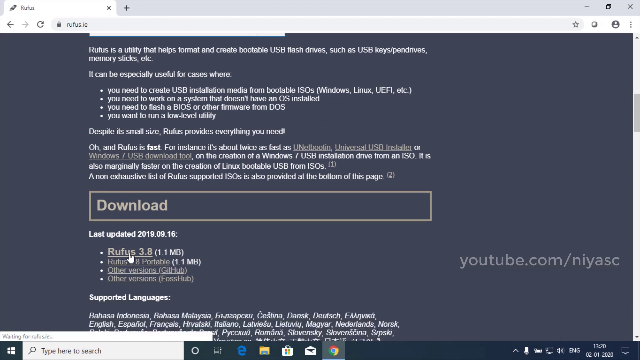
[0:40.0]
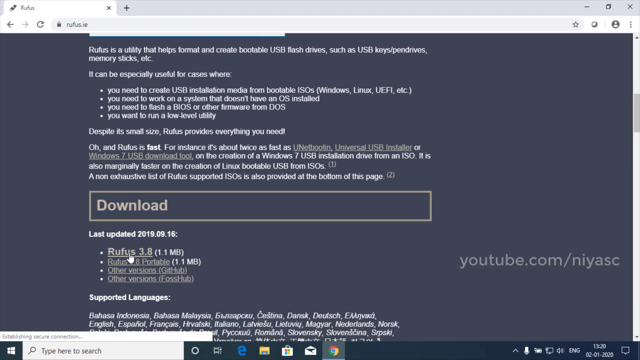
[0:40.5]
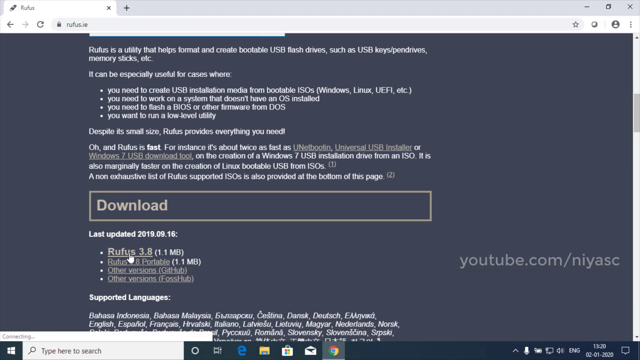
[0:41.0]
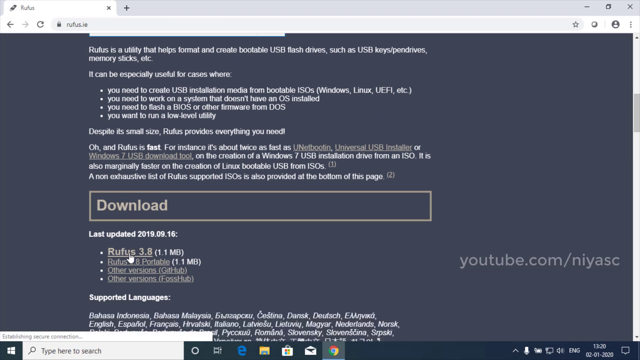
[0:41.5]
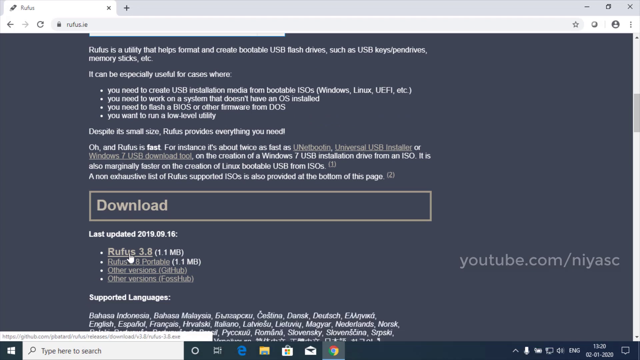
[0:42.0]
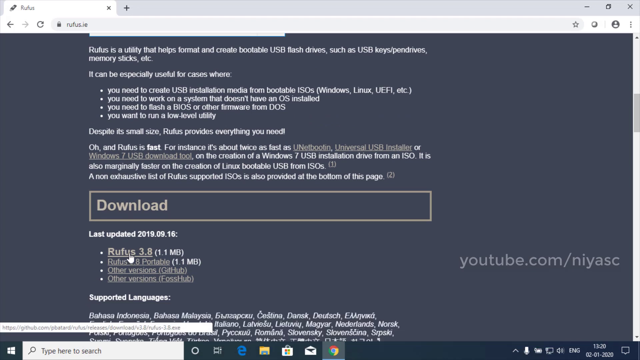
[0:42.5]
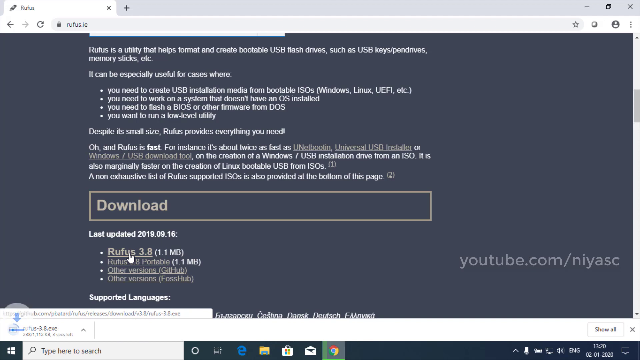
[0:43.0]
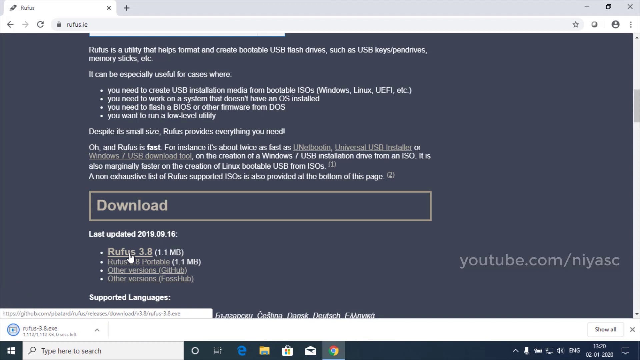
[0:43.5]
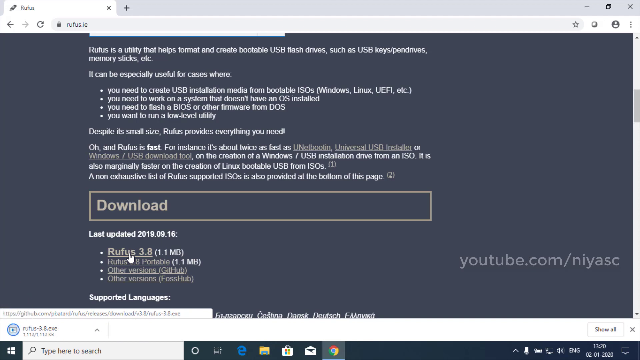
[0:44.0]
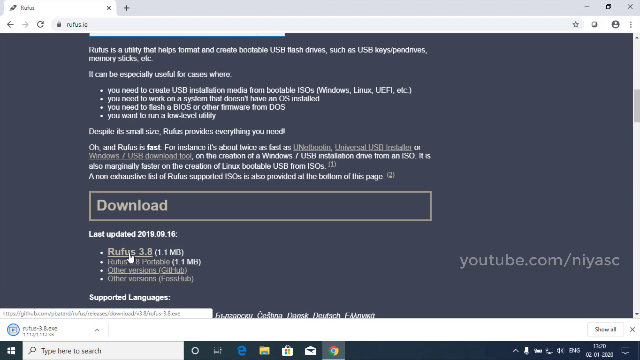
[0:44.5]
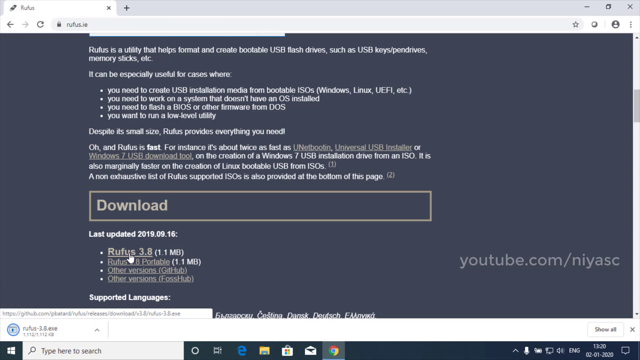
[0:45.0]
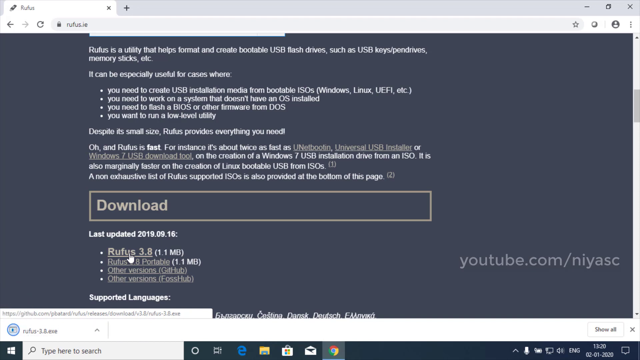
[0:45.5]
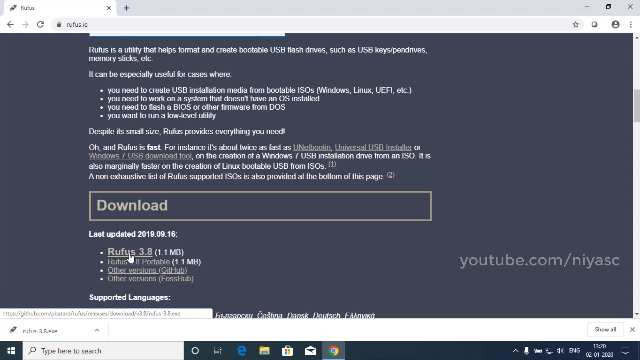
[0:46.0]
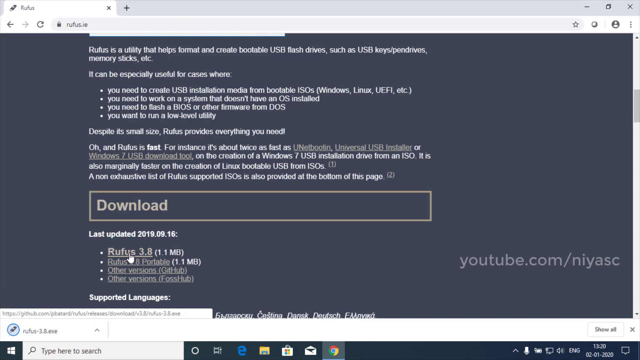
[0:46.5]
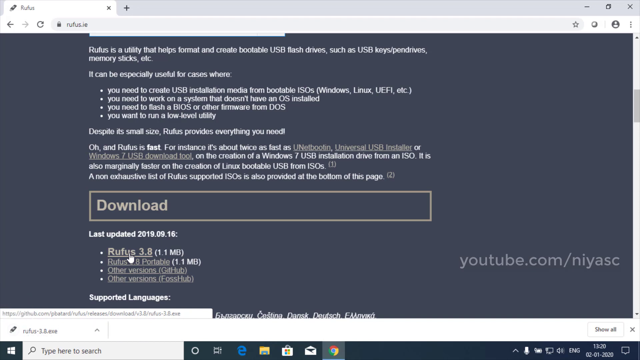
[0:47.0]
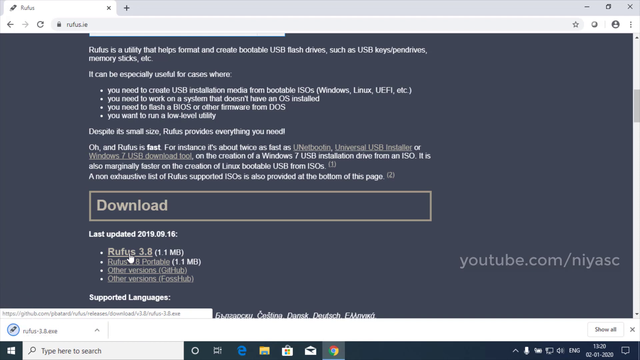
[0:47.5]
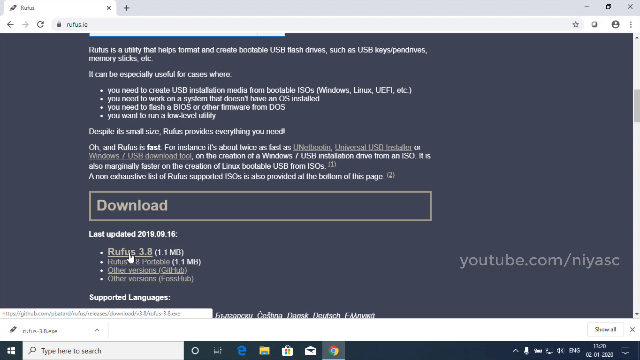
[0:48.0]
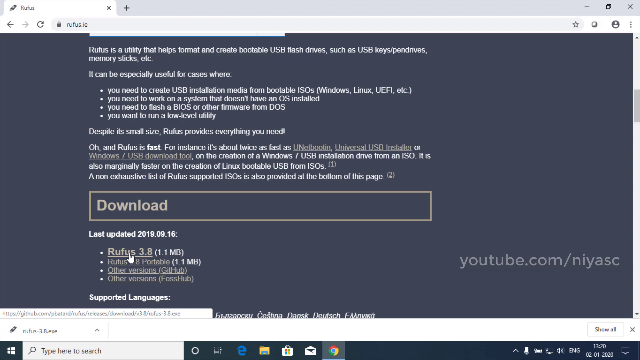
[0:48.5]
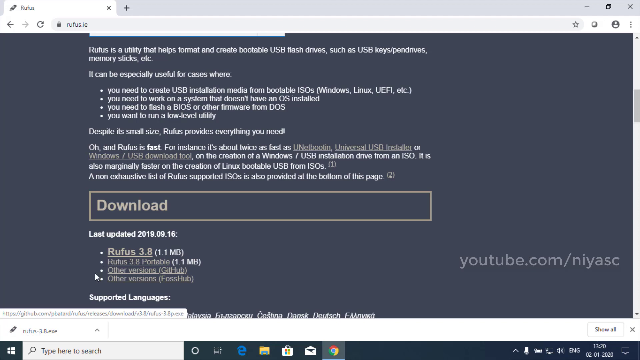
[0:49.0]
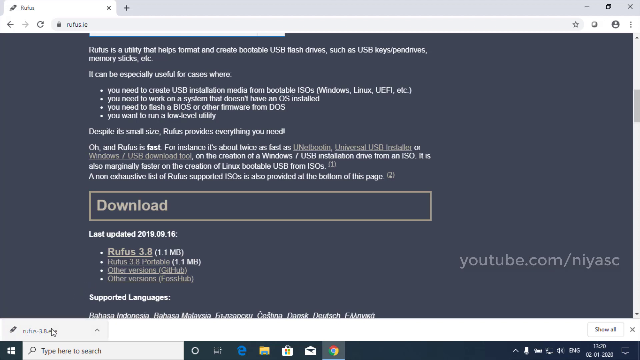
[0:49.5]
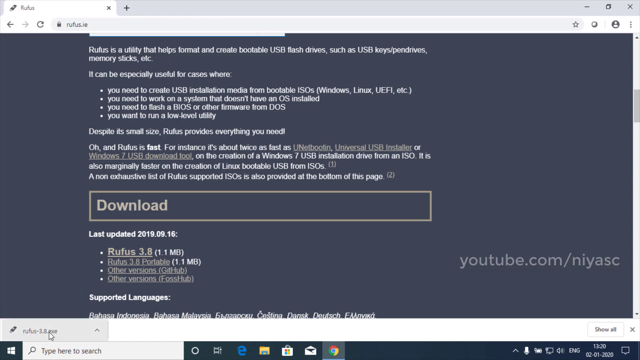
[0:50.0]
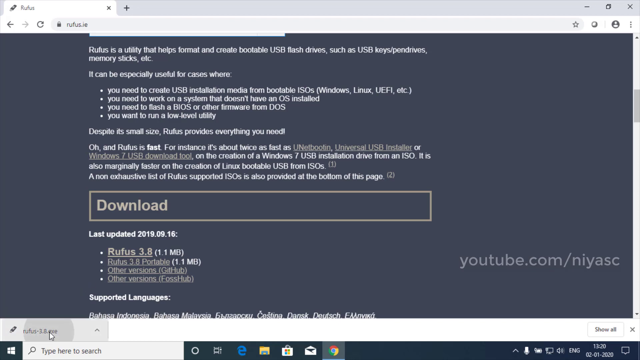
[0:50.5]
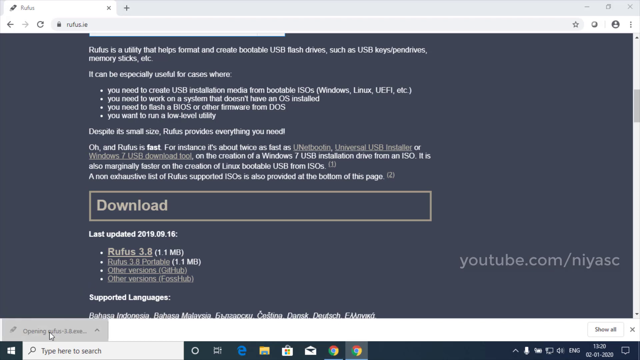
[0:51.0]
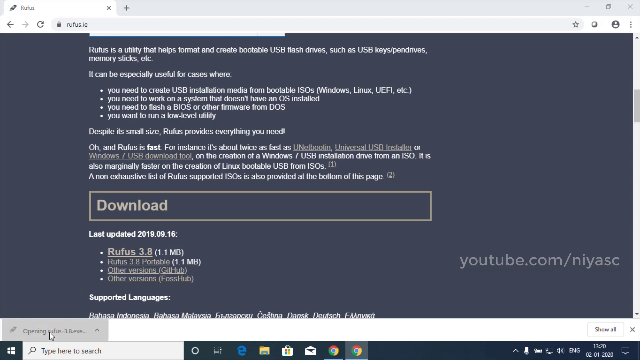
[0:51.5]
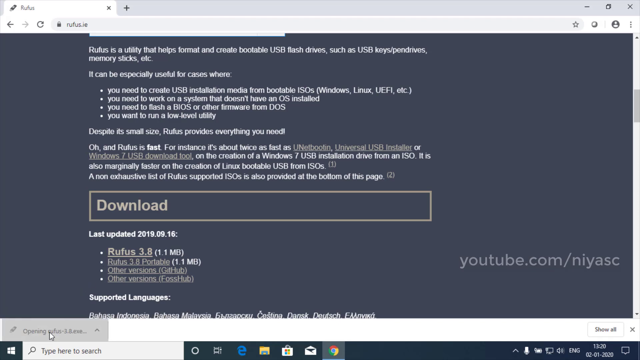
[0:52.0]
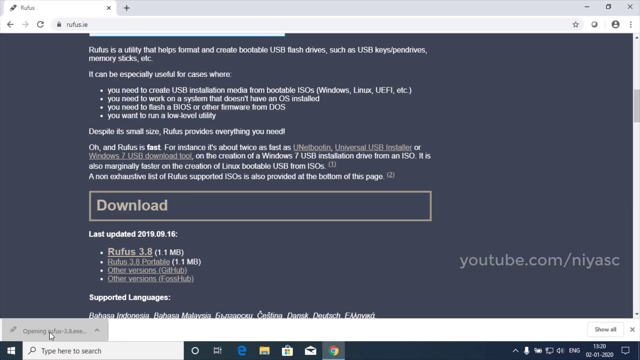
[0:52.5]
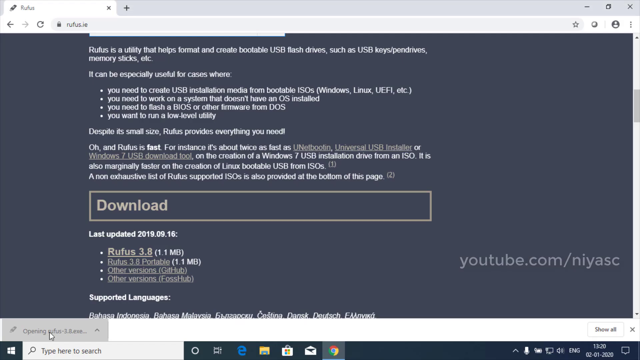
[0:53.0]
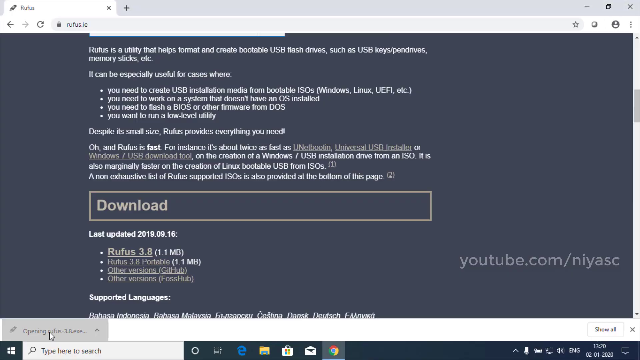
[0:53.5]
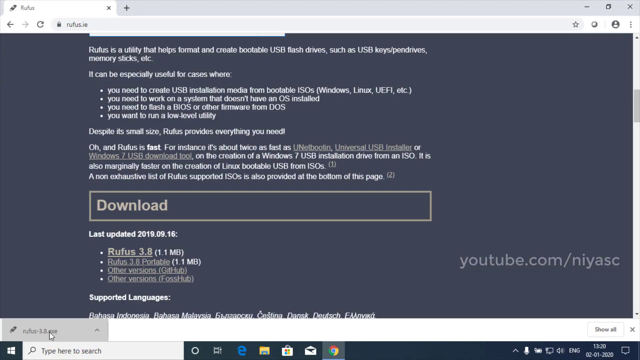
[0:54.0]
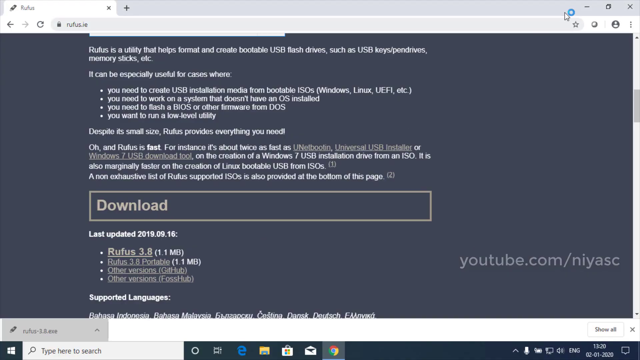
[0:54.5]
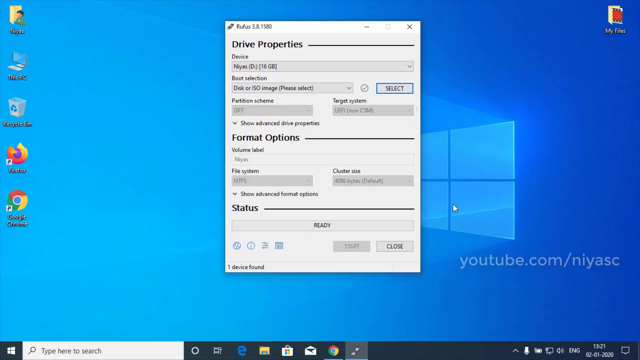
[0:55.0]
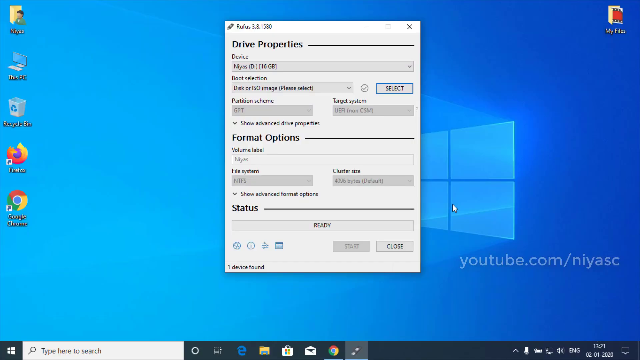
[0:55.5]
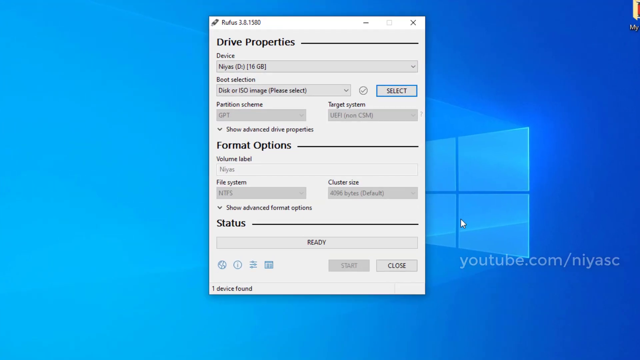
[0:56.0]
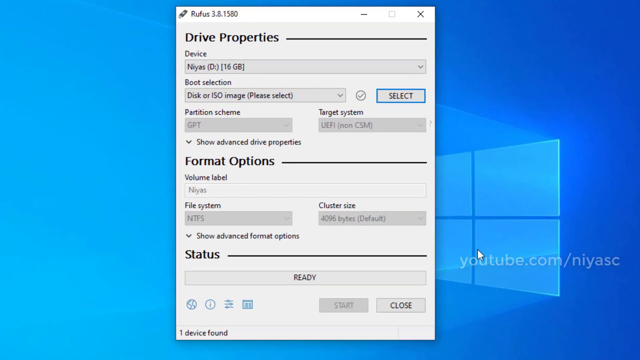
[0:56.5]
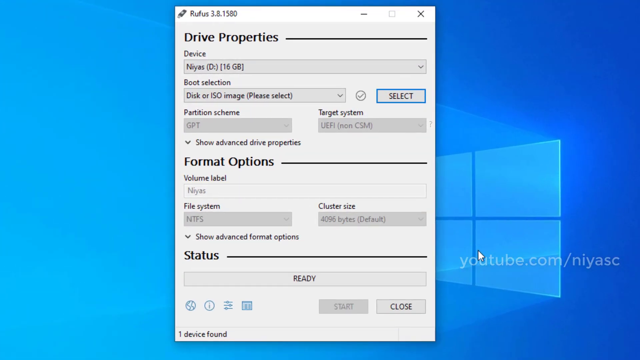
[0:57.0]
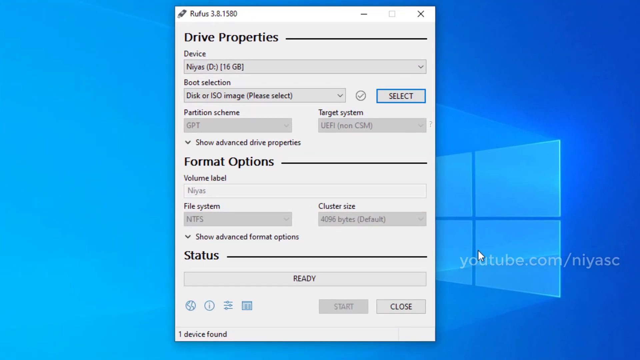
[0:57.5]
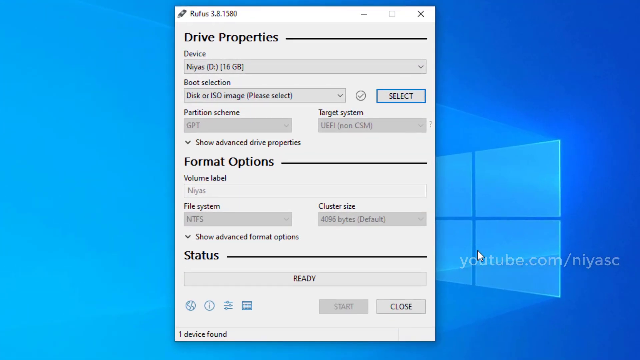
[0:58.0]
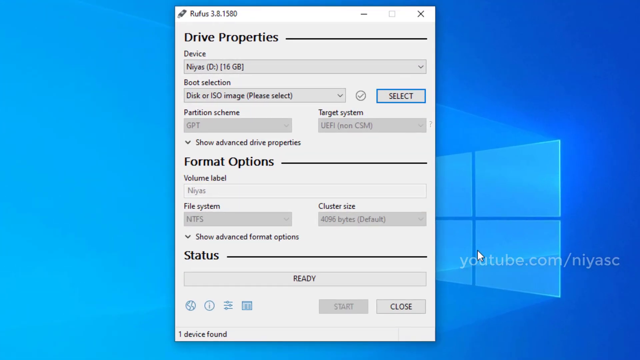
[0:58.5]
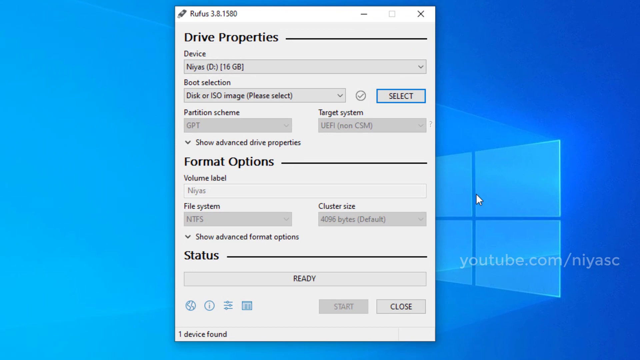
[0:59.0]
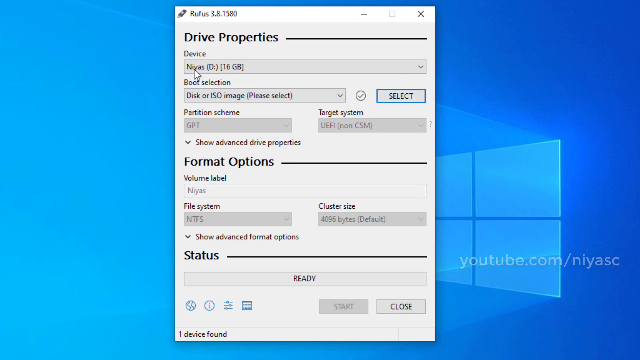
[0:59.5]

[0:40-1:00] On the Rufus home page, the user's cursor is over a link reading "Rufus 3.8", which looks like the newest version. The user apparently clicks it, as a file starts downloading in the bottom left corner. The download on the left-hand side has something like a paperclip icon, and a blue circle blinks over it twice. Once it finishes downloading, the user clicks on the file and it says "opening". The user then exits the Google Chrome browser completely, the website disappears, and the Rufus 3.8 window appears in the center of the screen. The view zooms in on it. At the top it says "drive properties", with clickable options below.